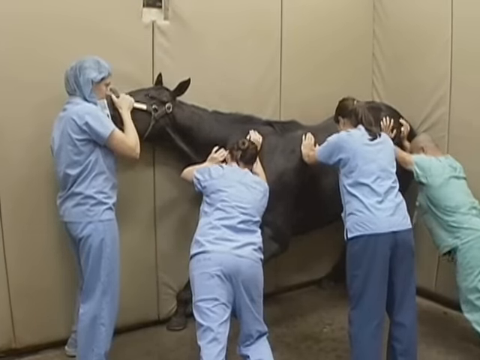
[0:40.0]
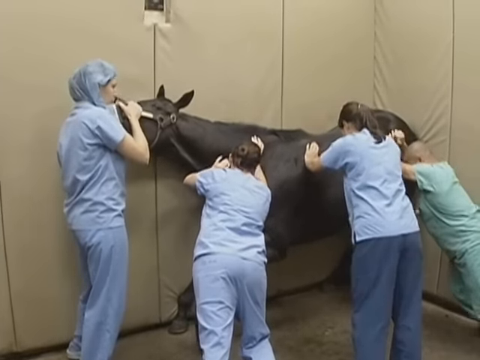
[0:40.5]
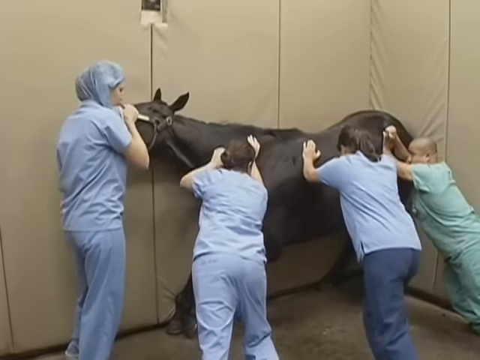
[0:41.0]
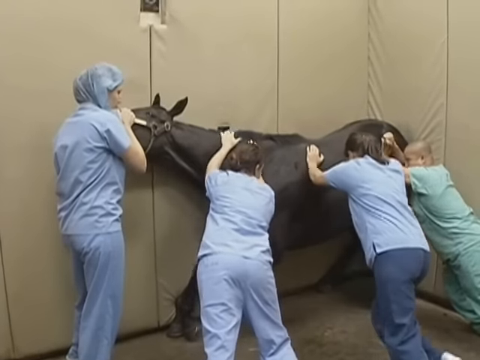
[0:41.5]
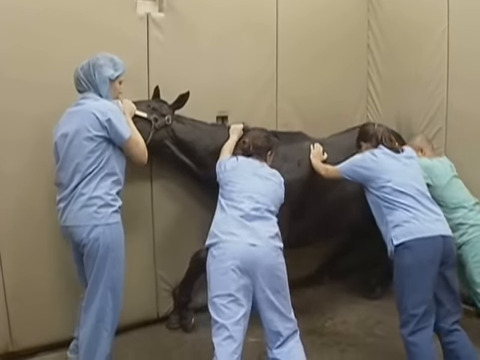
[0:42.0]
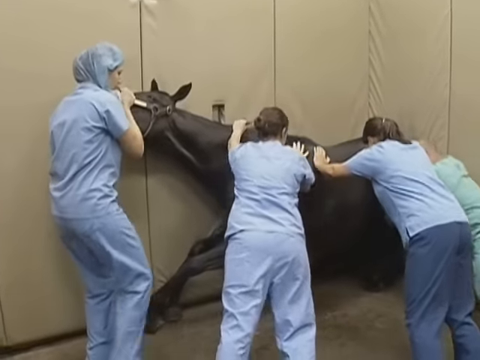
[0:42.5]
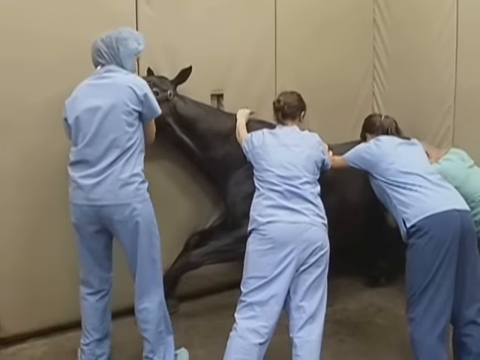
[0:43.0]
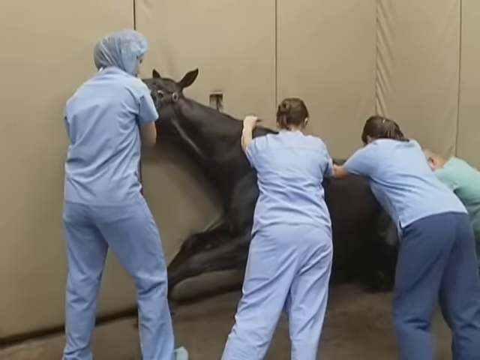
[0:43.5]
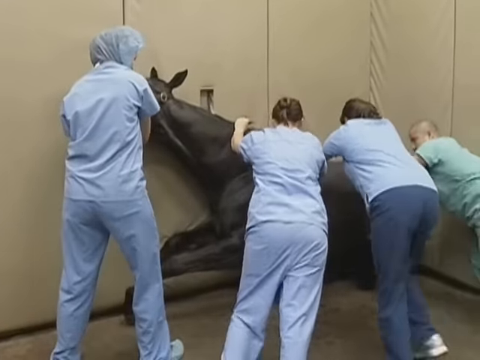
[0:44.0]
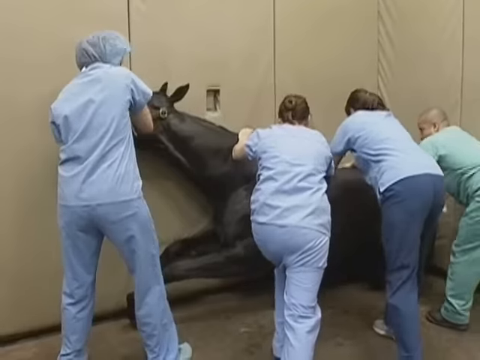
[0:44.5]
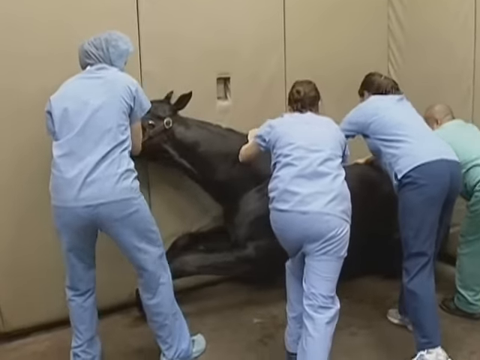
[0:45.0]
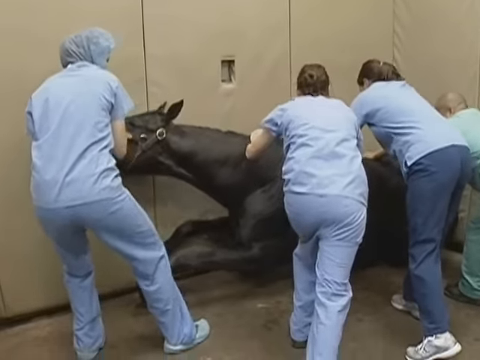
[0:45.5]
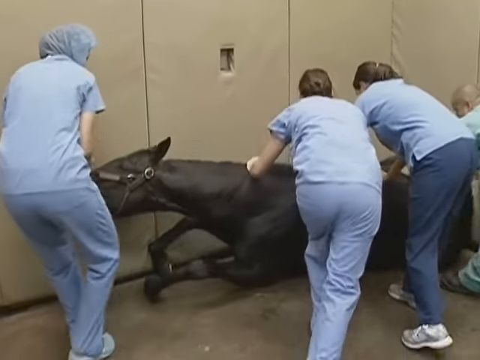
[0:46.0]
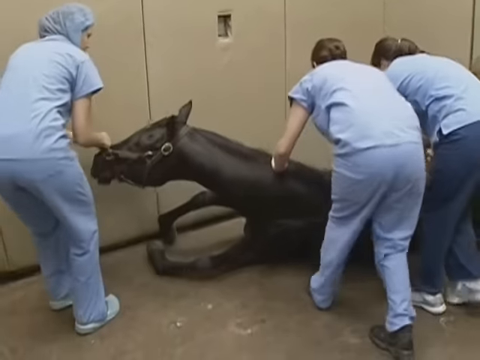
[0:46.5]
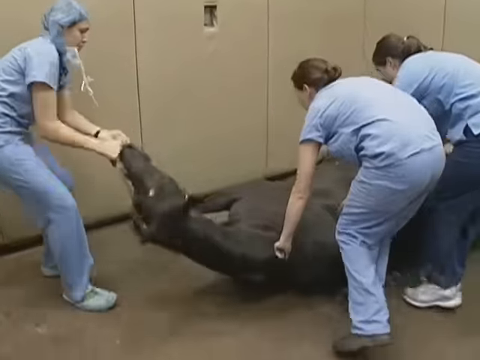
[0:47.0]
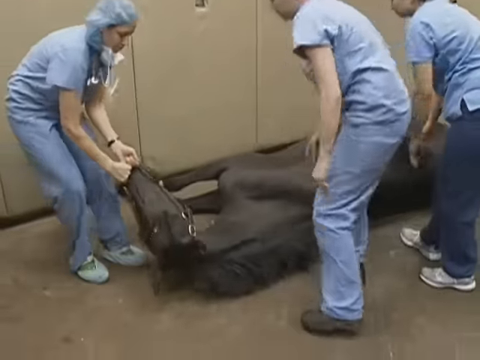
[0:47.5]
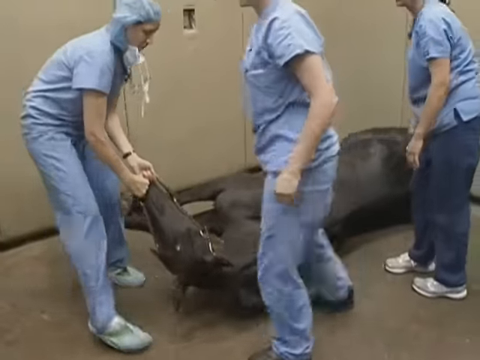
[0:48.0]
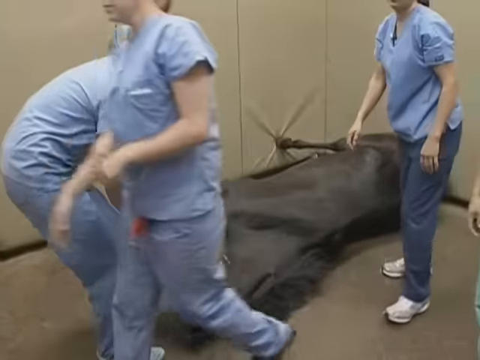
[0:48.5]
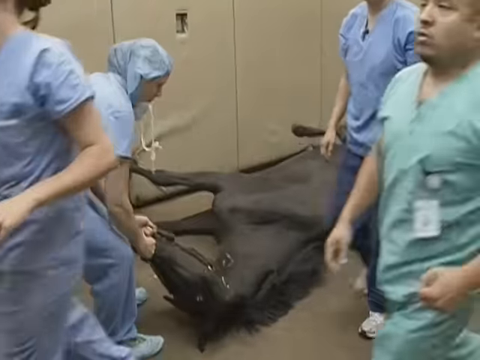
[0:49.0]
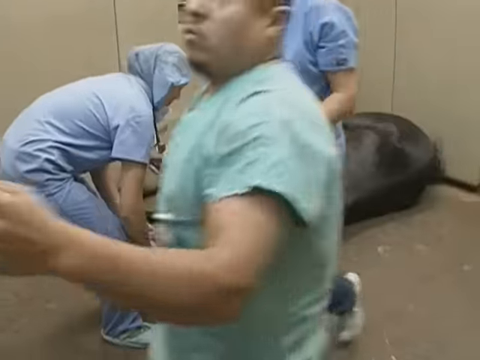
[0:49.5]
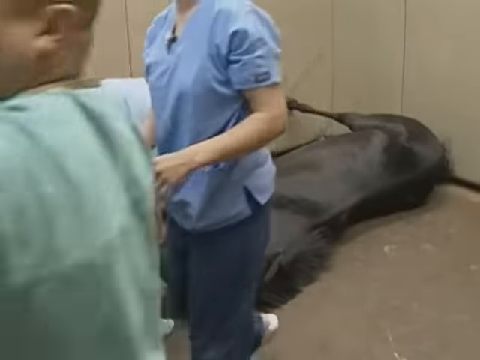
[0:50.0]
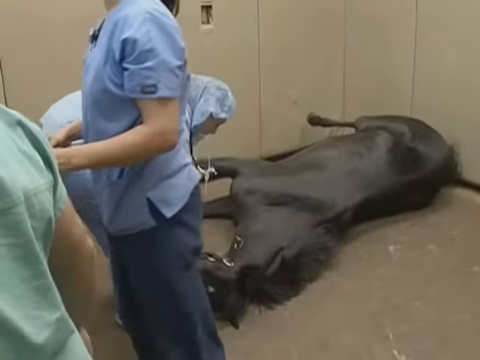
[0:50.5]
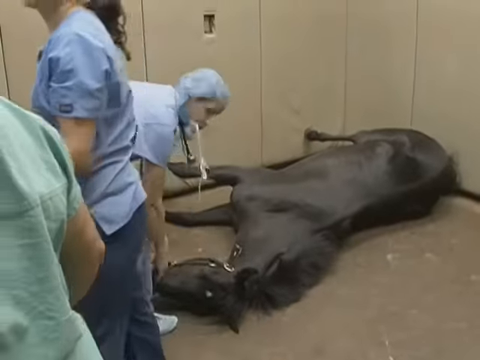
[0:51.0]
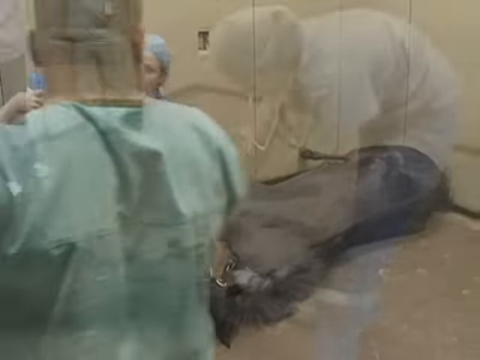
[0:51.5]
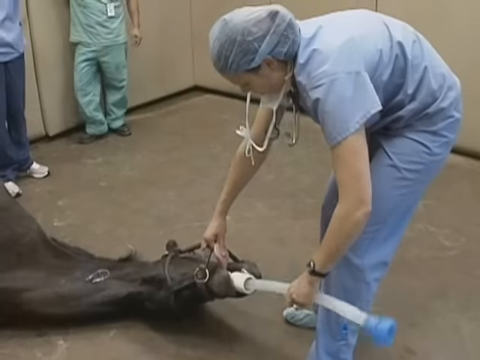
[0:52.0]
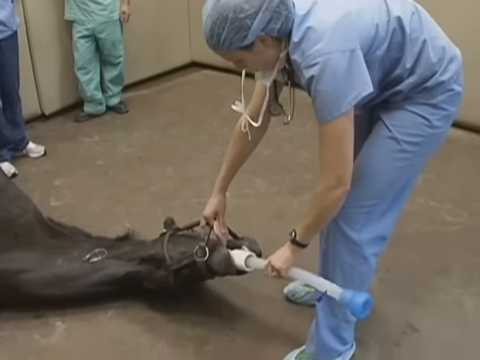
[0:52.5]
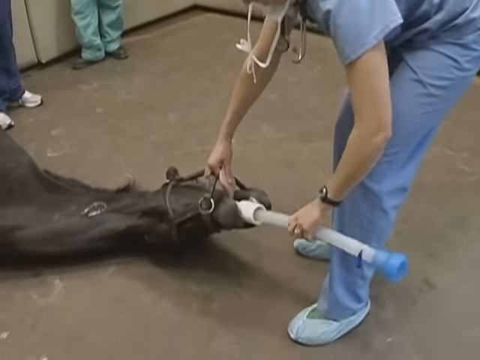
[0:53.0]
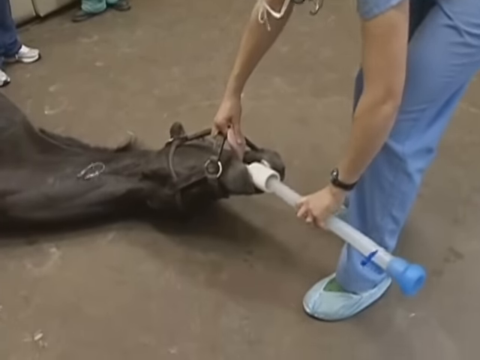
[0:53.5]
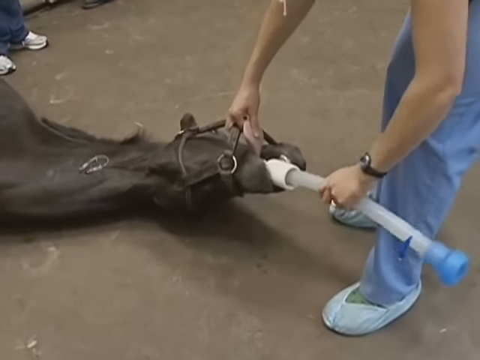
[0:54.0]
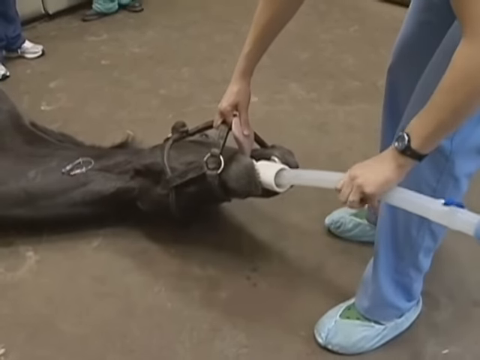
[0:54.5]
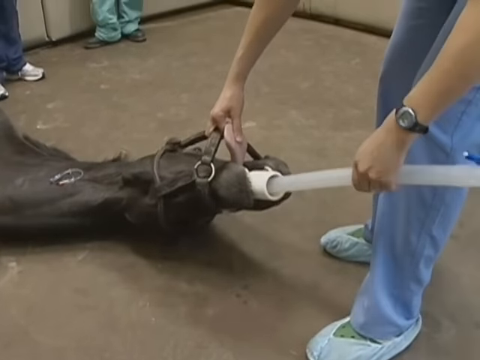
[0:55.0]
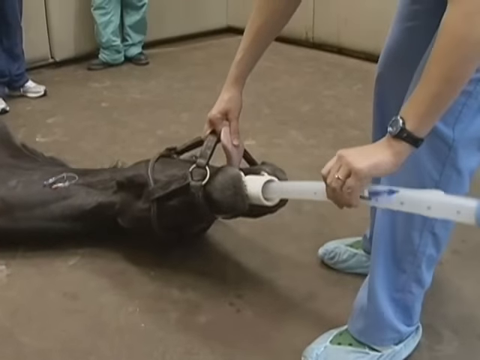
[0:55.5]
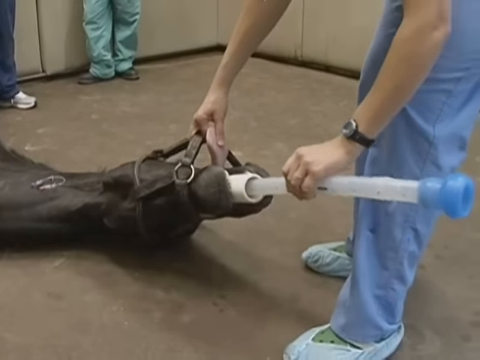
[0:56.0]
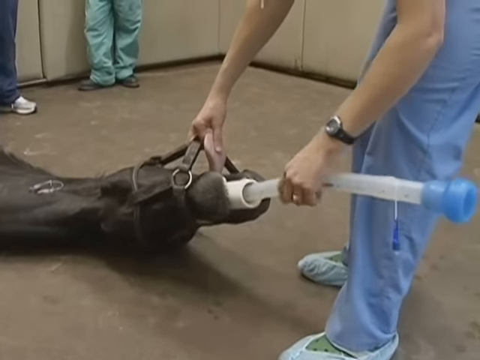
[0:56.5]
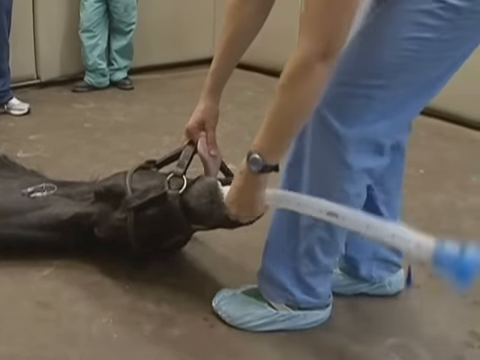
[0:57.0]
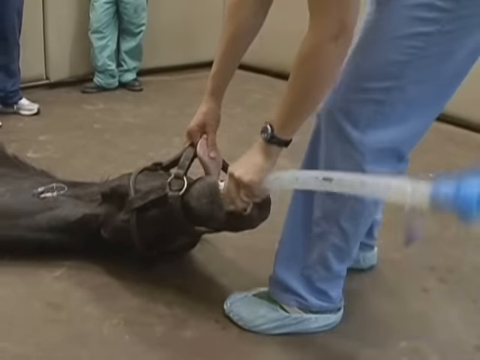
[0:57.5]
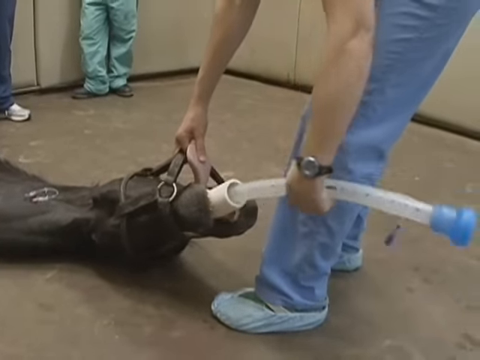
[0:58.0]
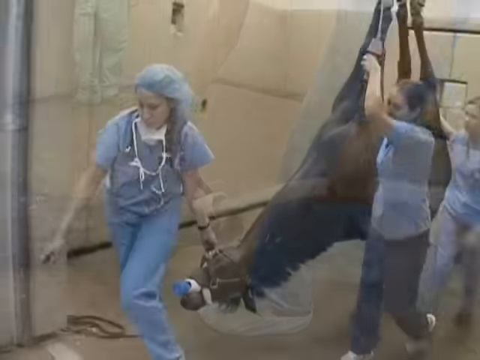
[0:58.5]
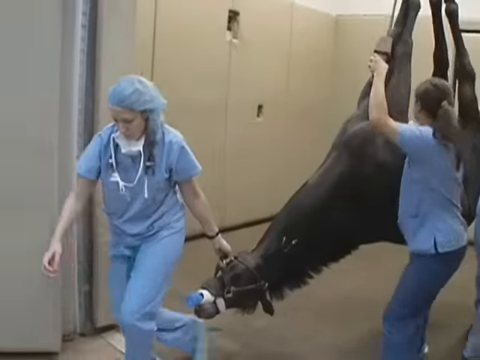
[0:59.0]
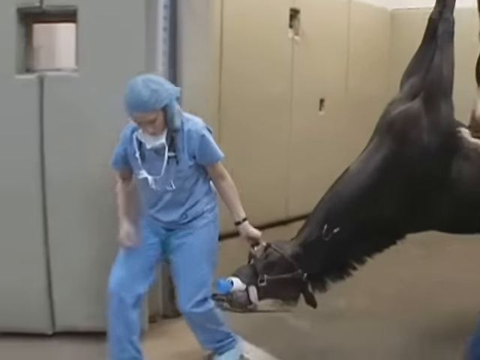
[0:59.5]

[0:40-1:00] The four people keep pushing the horse into the wall, seemingly more to restrain it than anything else. All of them wear scrubs: the women in light blue and the man in light green. The horse's knees begin to buckle and it finally starts to lie down on the ground, apparently as the sedative takes effect; after it lies down, it eventually ends up on its side. One of the veterinarians or veterinary techs then inserts a tube into the horse's mouth. There appears to be a plastic piece in its mouth, and a long piece of flexible tubing with kind of a blue plunger at its end is fed through that plastic tube into the mouth of the horse lying on the ground.